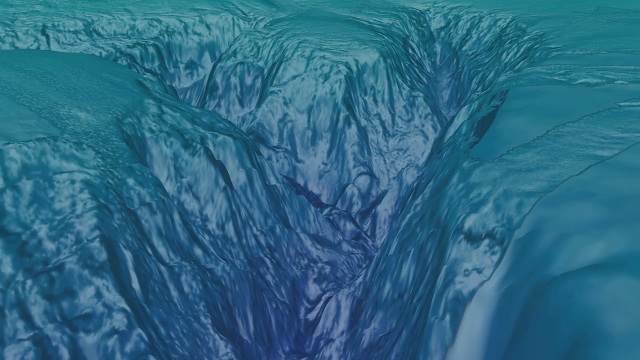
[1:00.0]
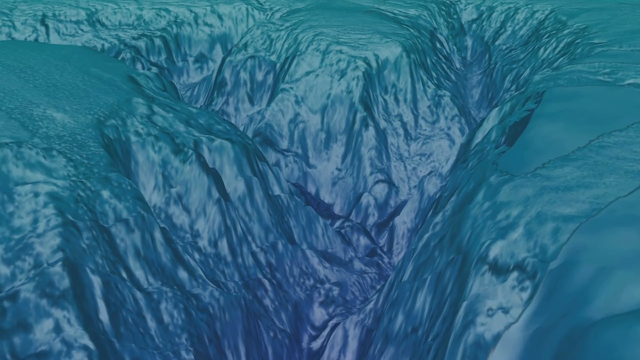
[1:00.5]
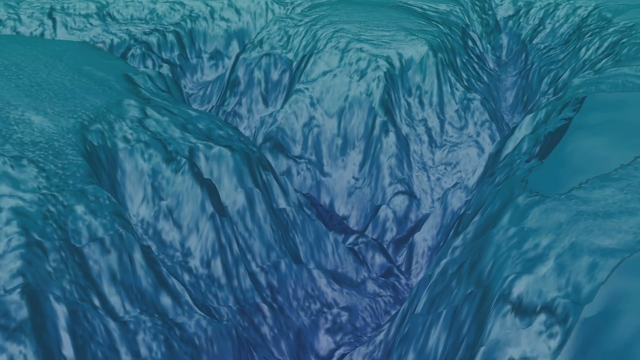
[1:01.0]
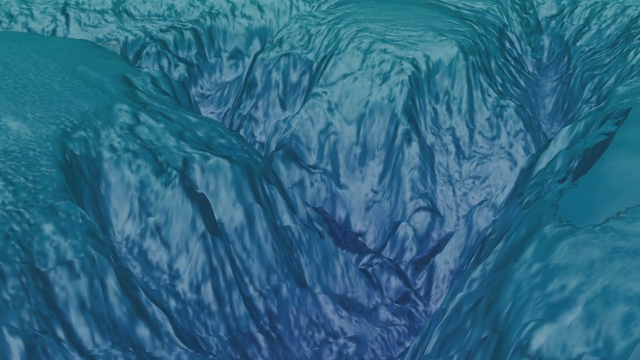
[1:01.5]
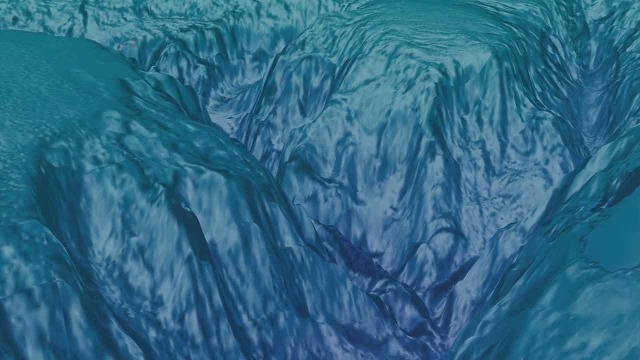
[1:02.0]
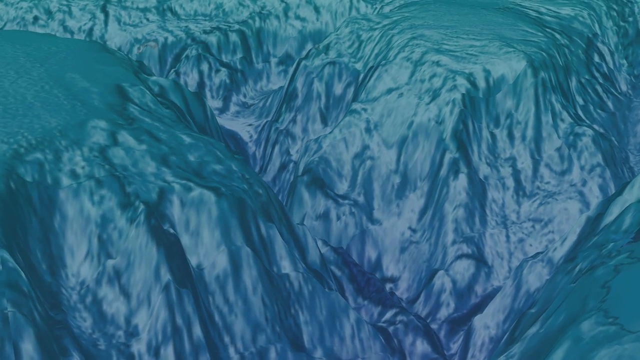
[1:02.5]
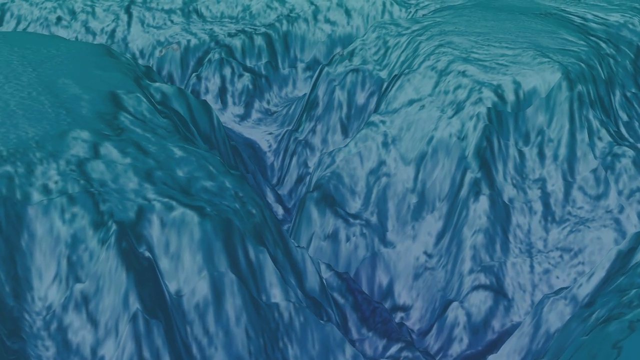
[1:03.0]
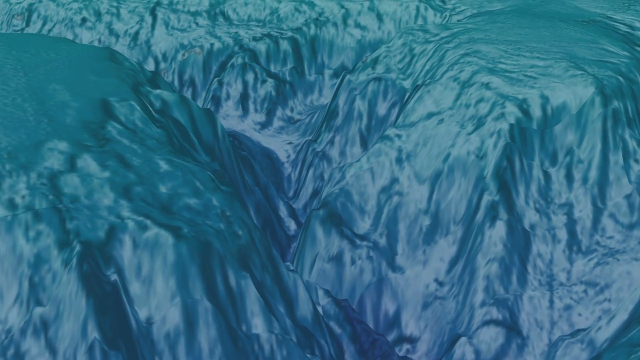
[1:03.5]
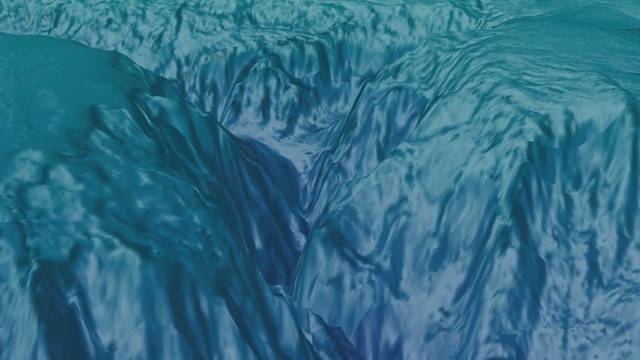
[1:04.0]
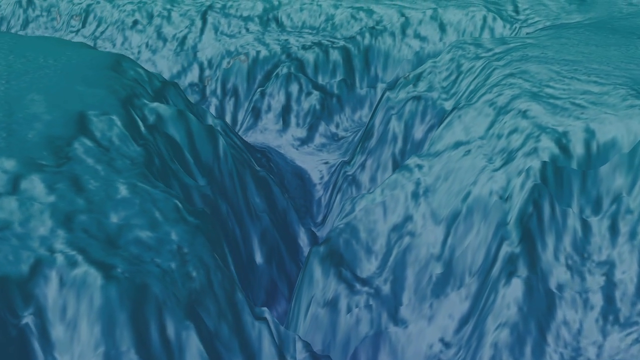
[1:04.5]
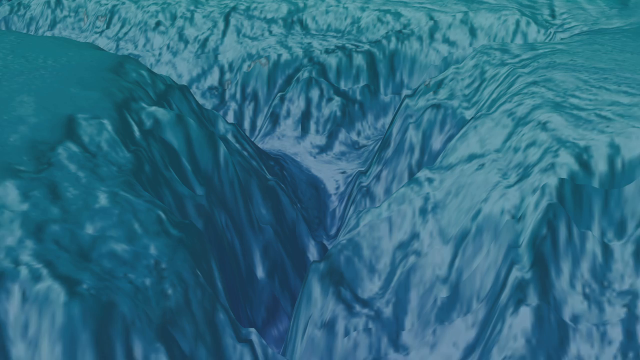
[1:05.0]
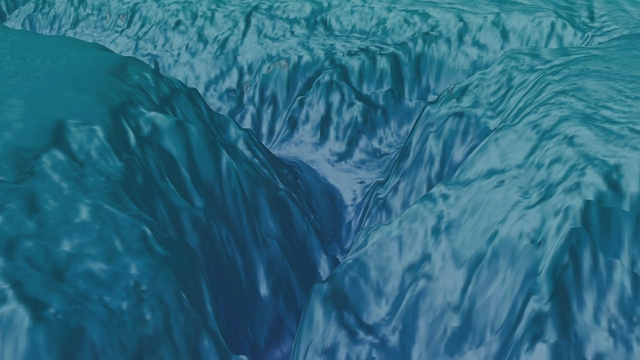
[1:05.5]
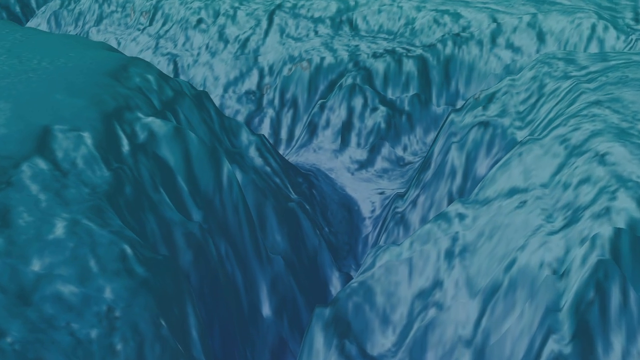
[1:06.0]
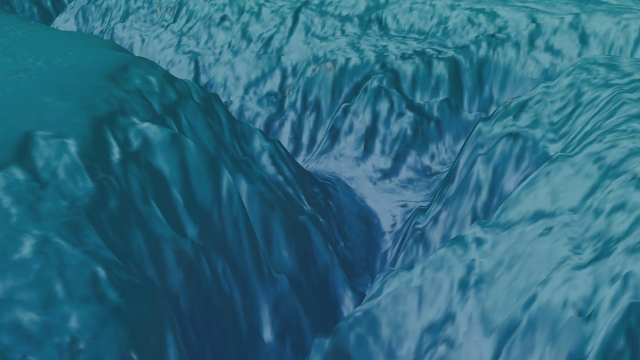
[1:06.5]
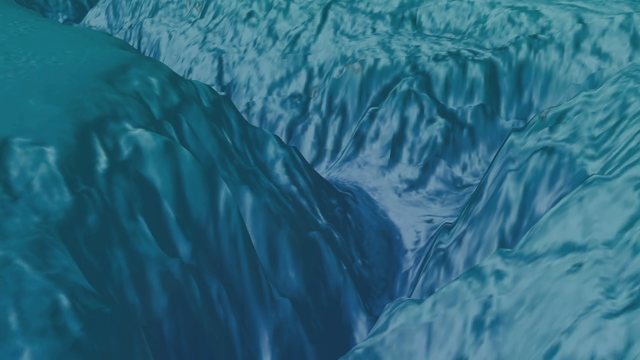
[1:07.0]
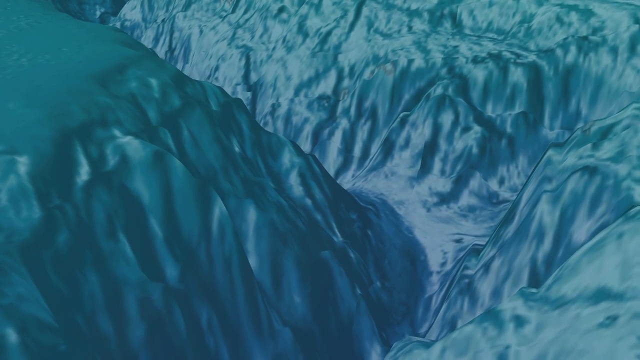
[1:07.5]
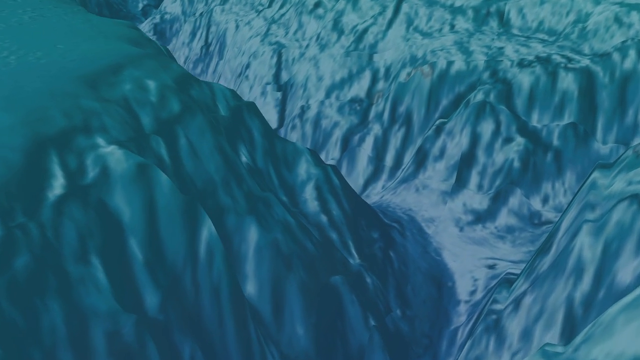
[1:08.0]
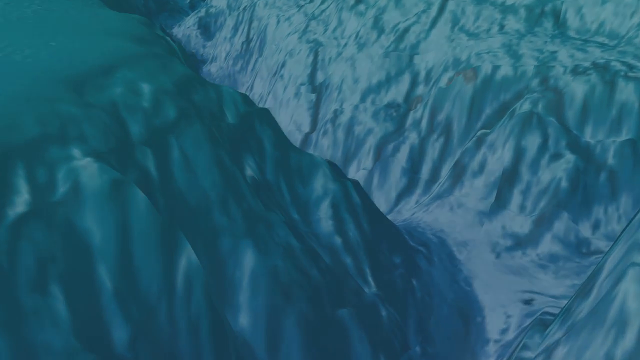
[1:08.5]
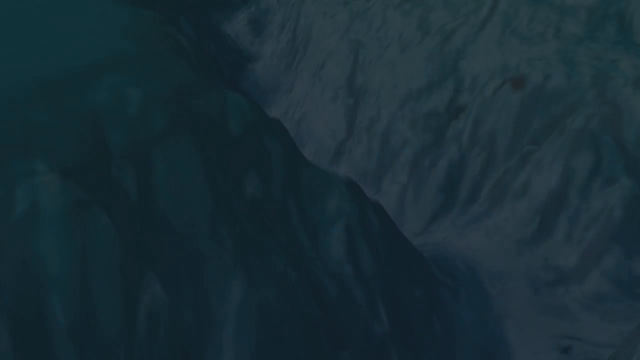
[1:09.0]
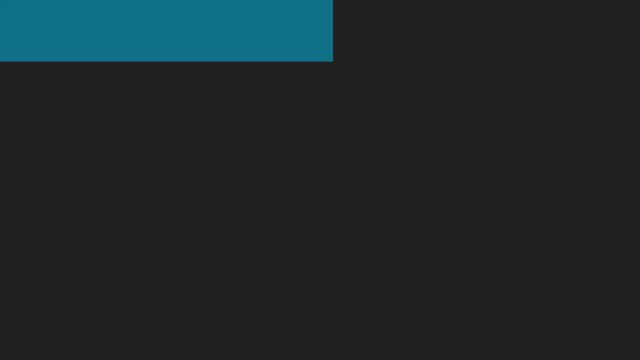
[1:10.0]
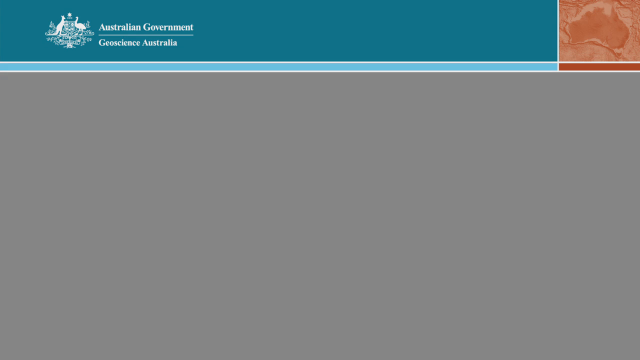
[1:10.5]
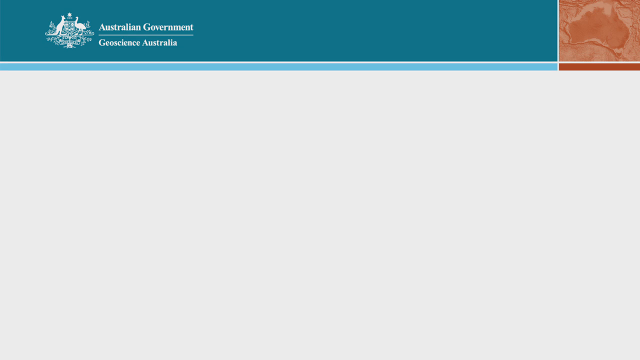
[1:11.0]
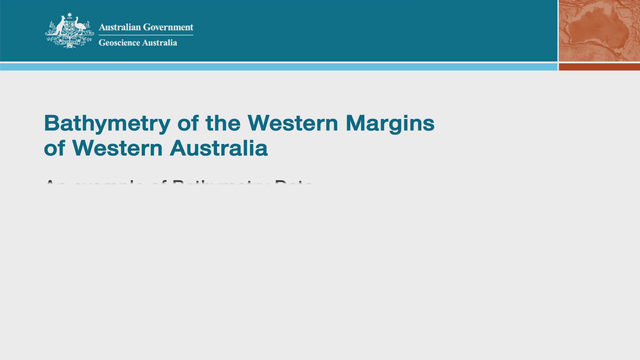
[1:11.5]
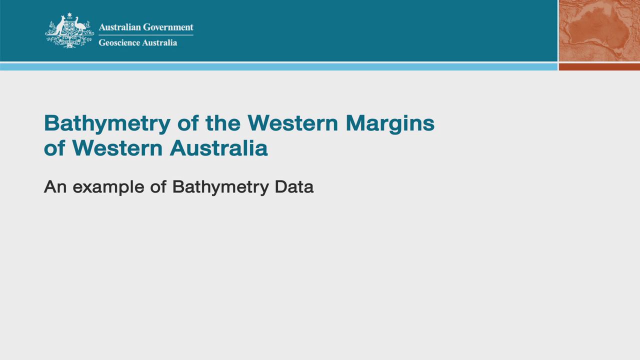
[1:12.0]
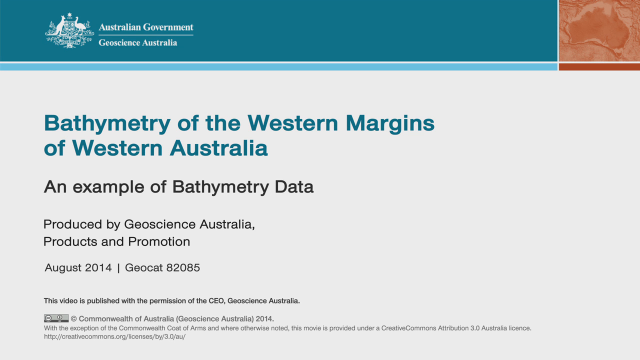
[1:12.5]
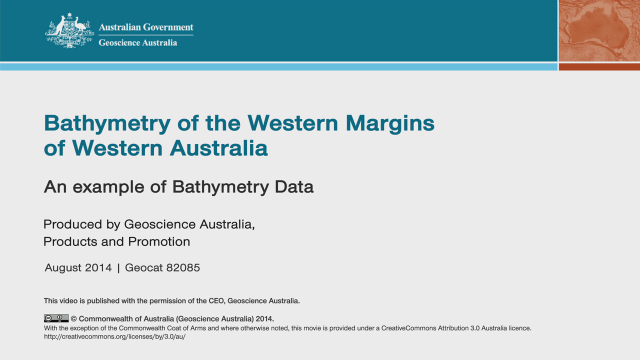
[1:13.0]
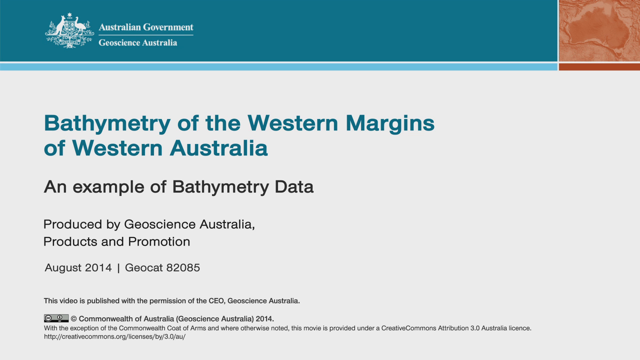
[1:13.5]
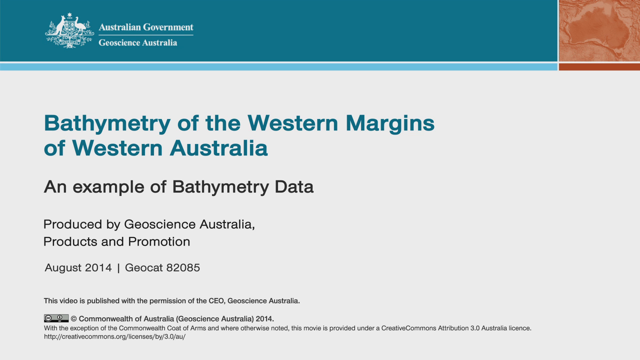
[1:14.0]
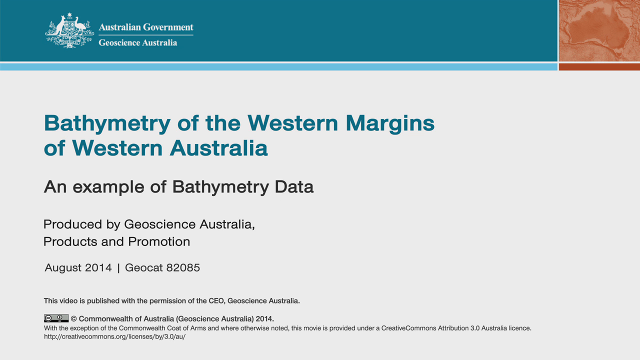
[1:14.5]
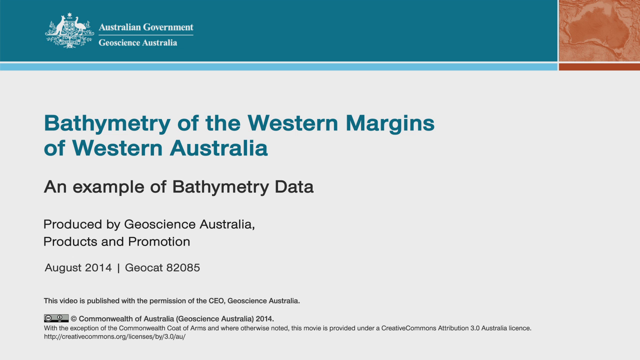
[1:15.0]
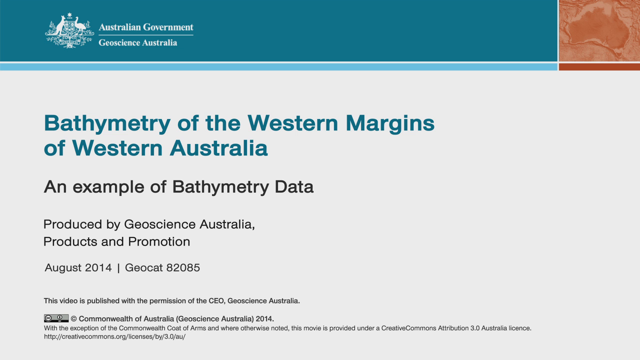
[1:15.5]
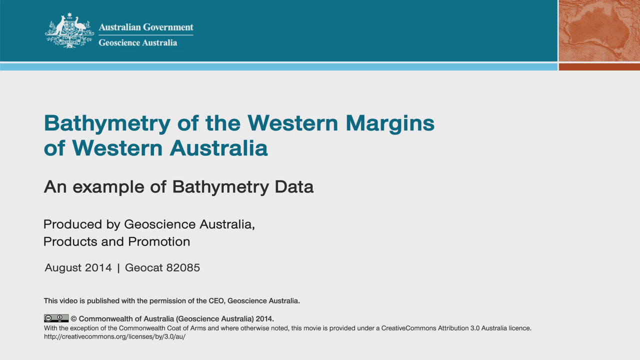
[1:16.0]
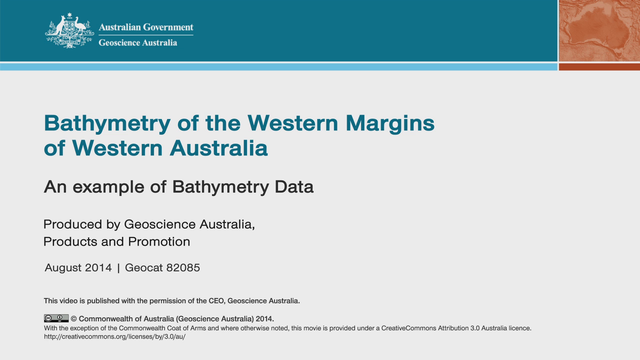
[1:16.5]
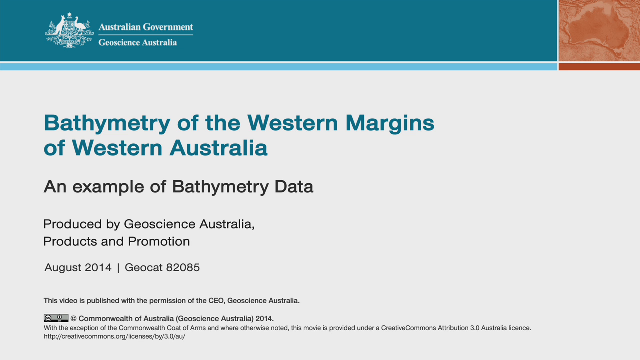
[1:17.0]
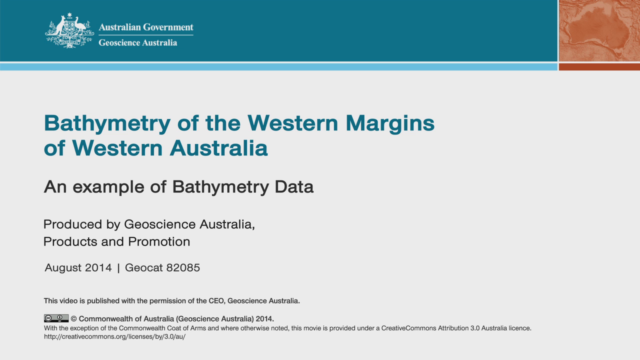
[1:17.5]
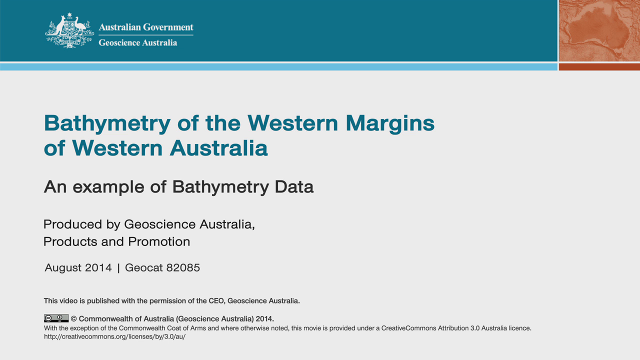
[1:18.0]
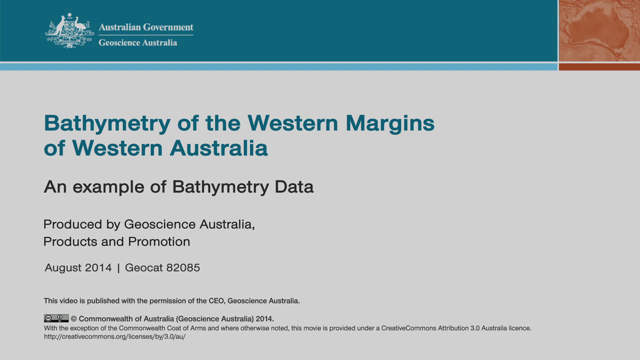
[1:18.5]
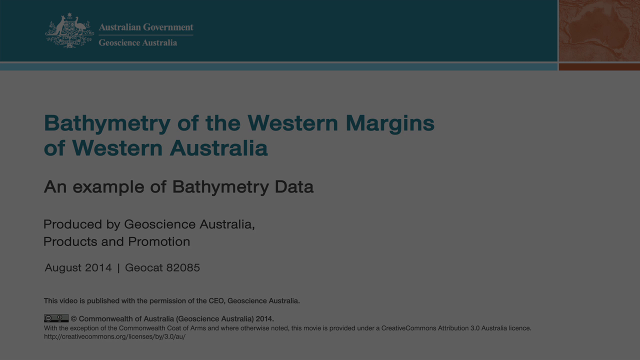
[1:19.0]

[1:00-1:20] What looks like some type of canyon appears, with many trenches, grooves and ridges. The camera keeps moving, revealing more valleys and indentations. The screen then goes black and text reads "BATHYMETRY of the Western Margins of Western Australia," "Produced by Geoscience Australia" and "August 2014."